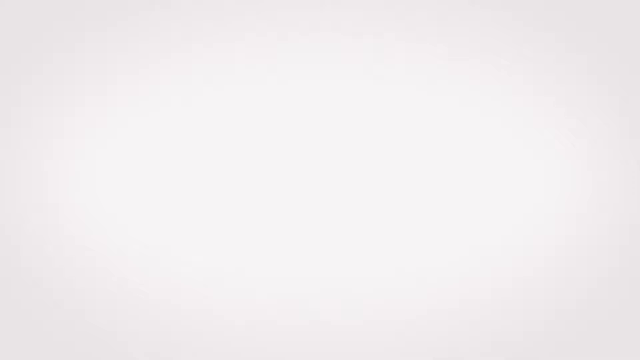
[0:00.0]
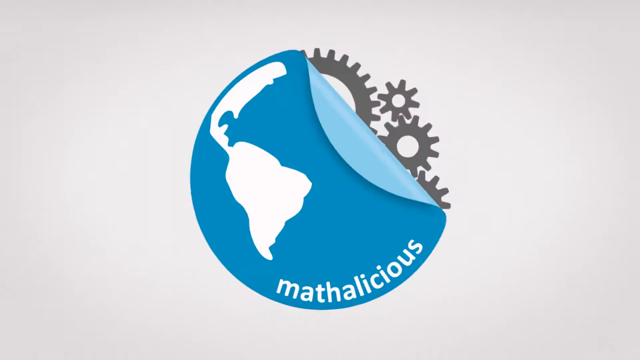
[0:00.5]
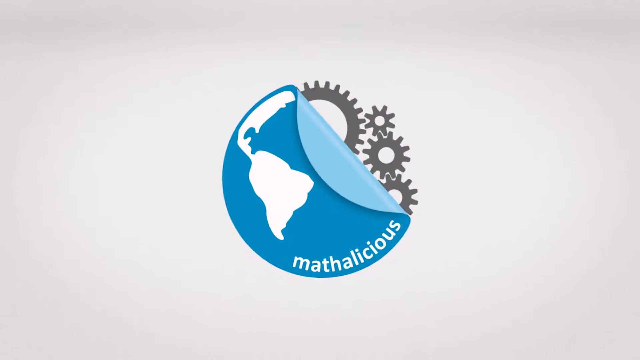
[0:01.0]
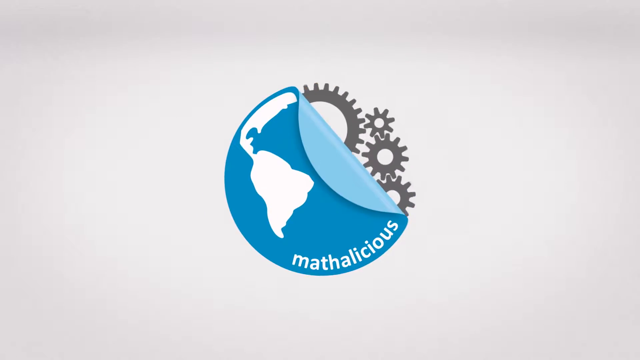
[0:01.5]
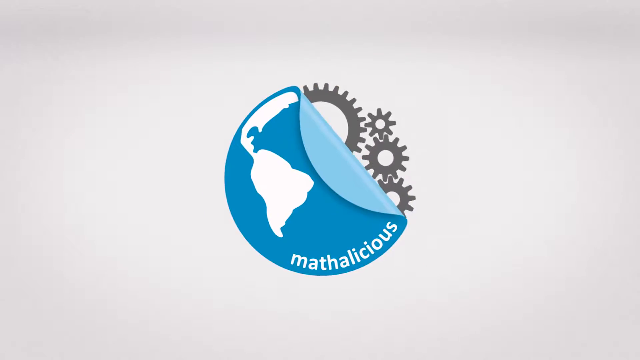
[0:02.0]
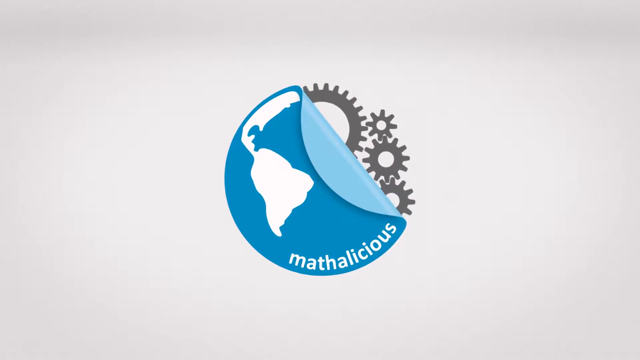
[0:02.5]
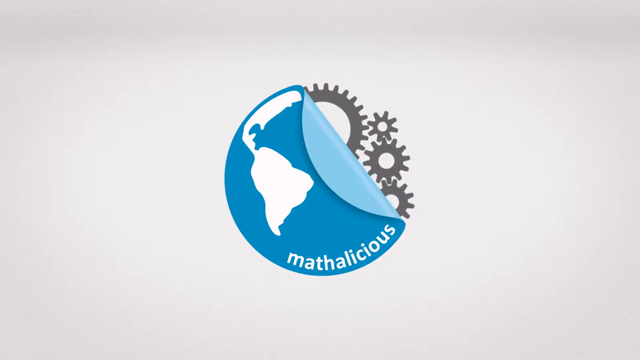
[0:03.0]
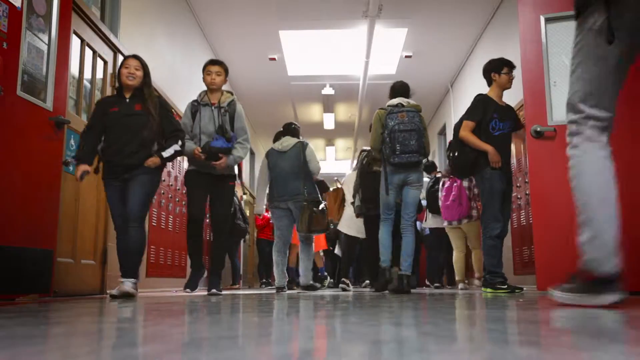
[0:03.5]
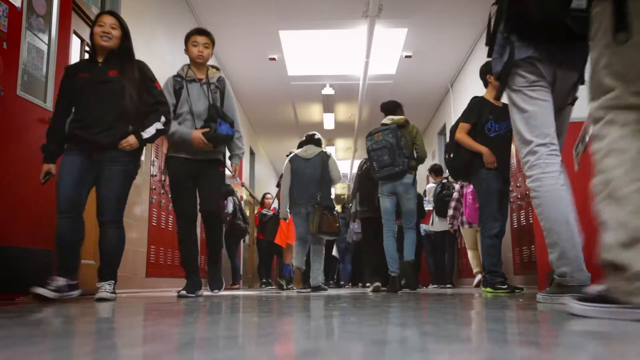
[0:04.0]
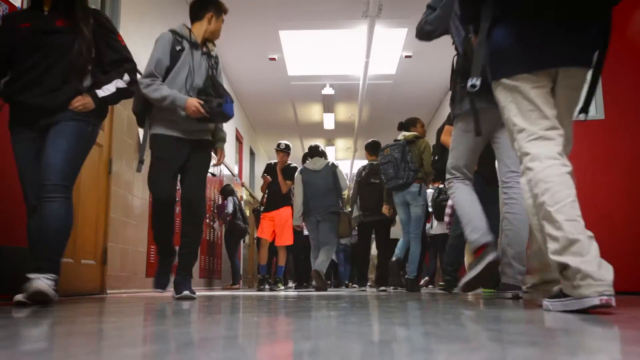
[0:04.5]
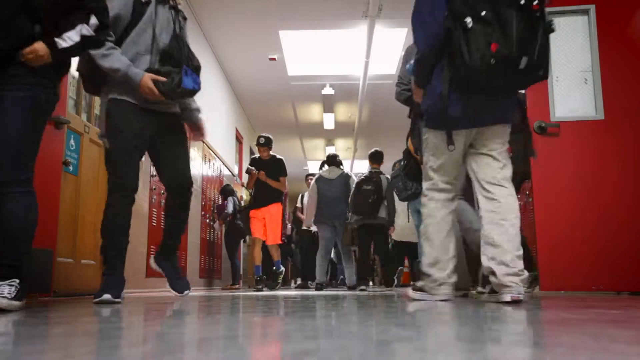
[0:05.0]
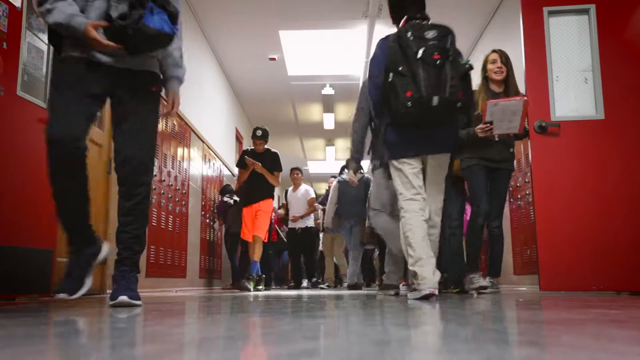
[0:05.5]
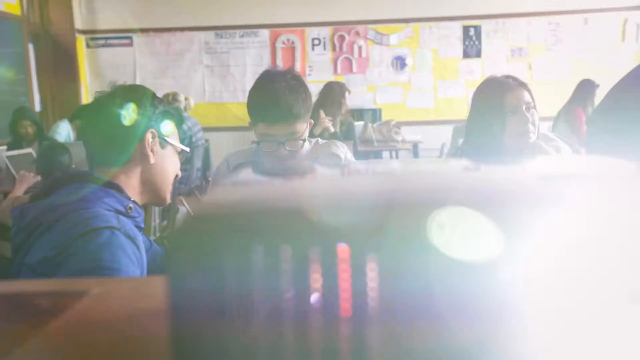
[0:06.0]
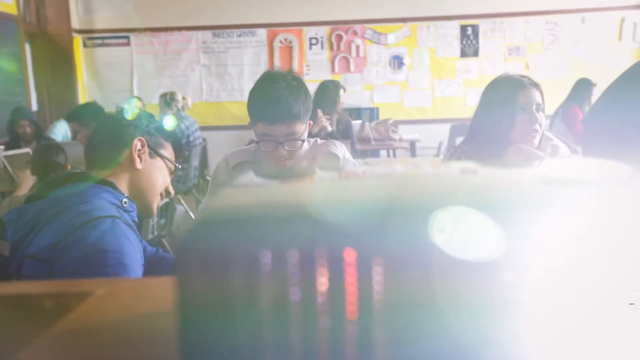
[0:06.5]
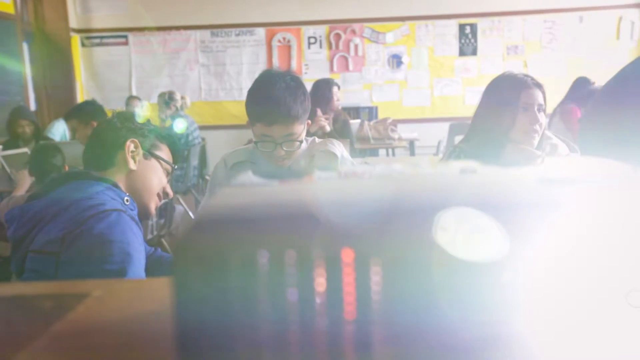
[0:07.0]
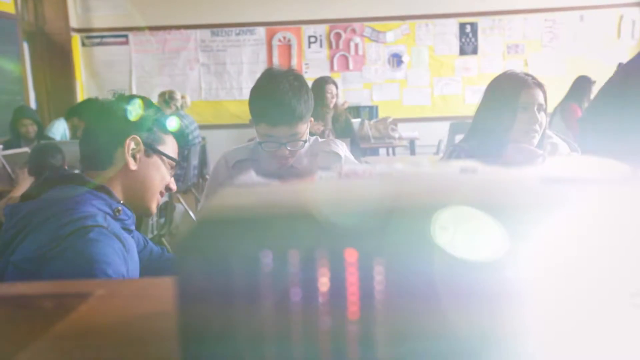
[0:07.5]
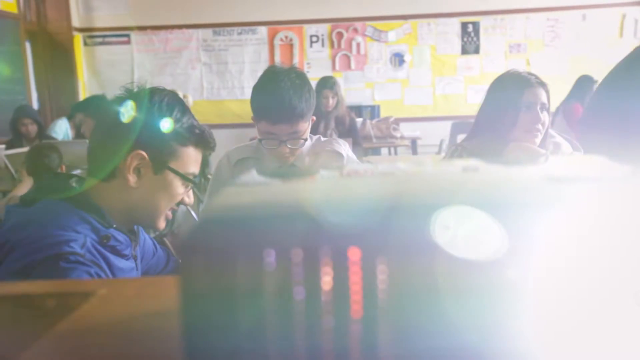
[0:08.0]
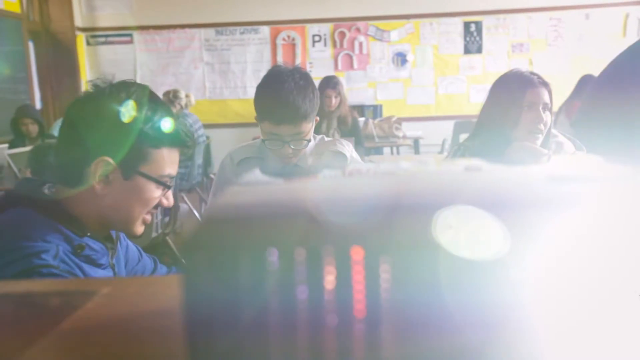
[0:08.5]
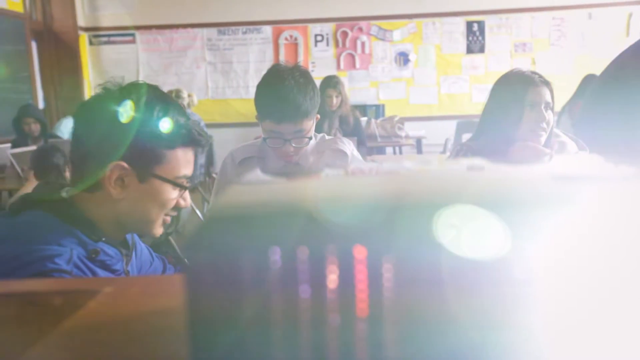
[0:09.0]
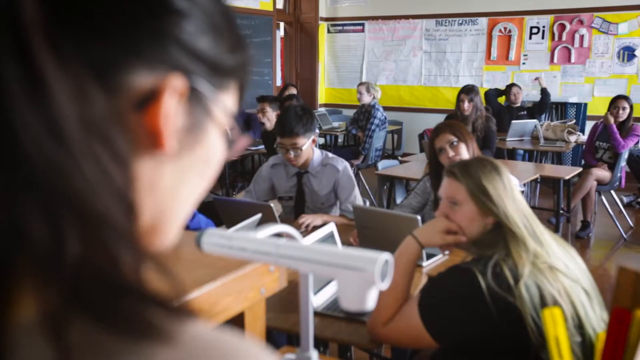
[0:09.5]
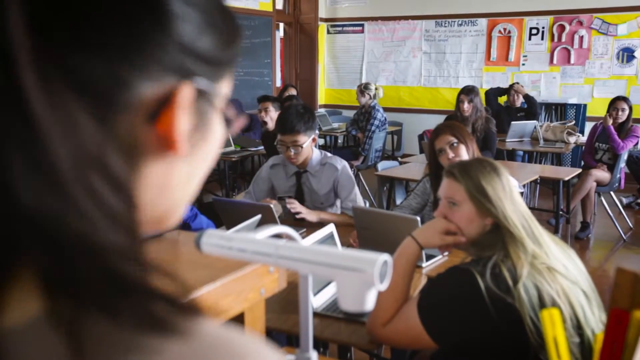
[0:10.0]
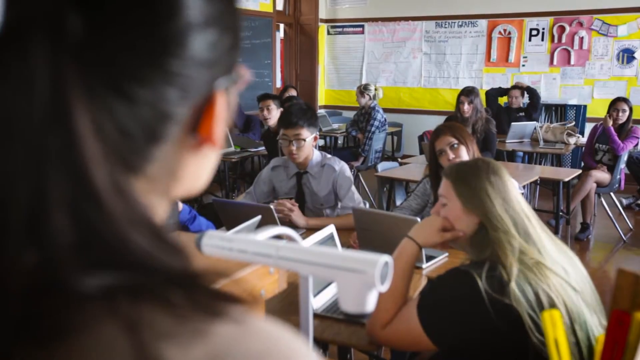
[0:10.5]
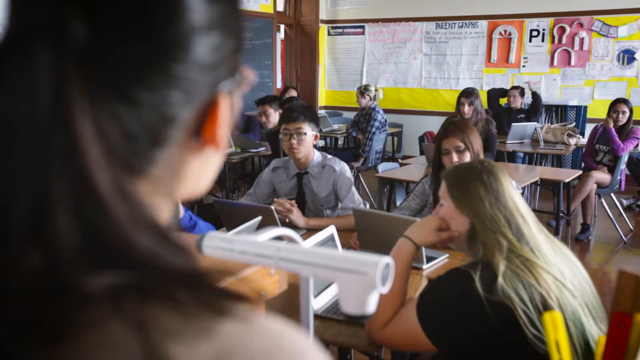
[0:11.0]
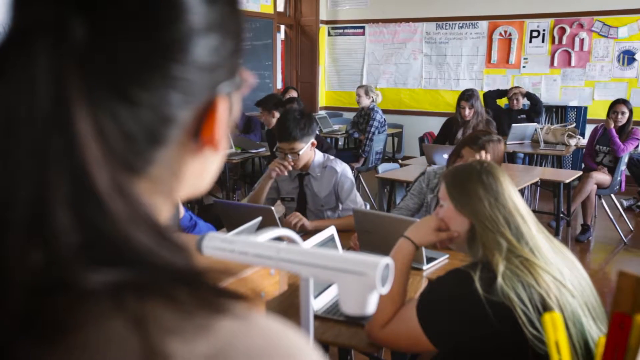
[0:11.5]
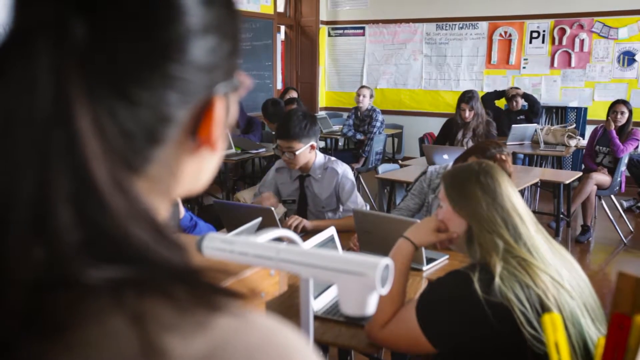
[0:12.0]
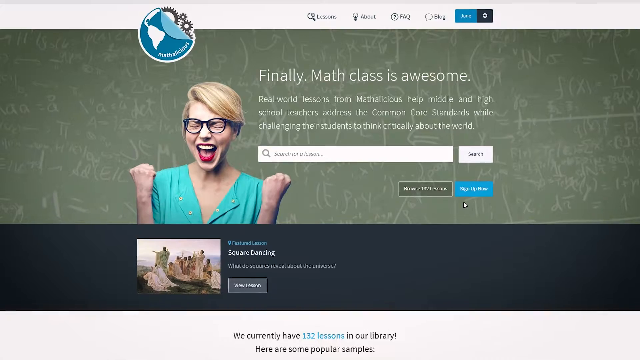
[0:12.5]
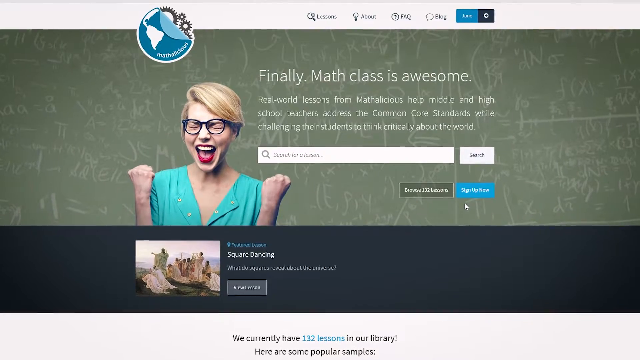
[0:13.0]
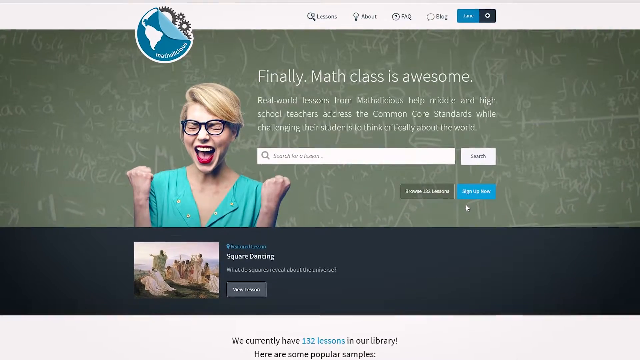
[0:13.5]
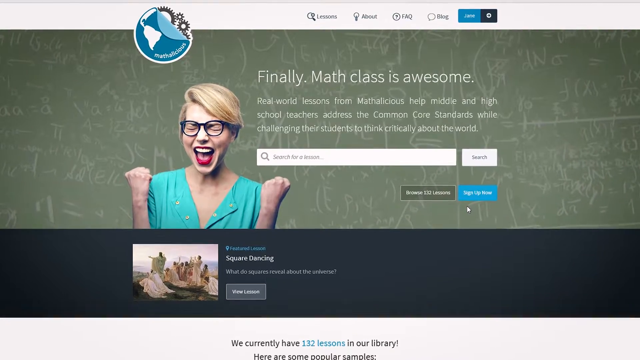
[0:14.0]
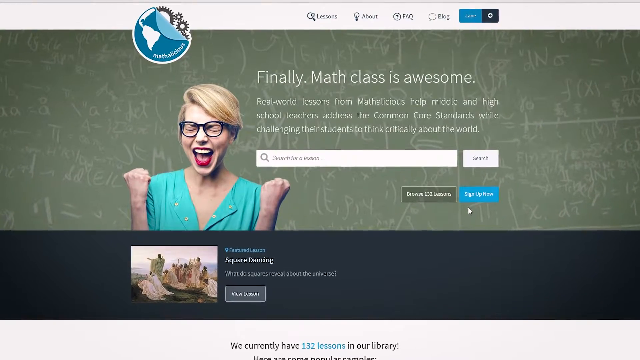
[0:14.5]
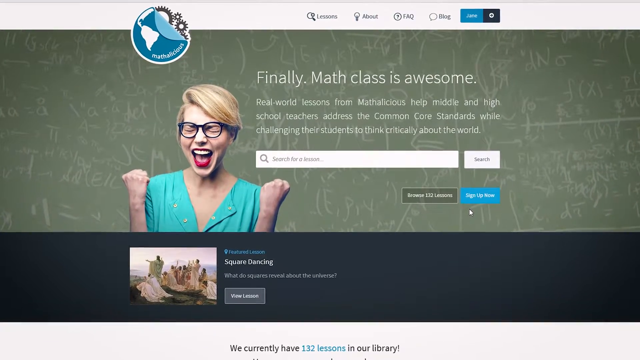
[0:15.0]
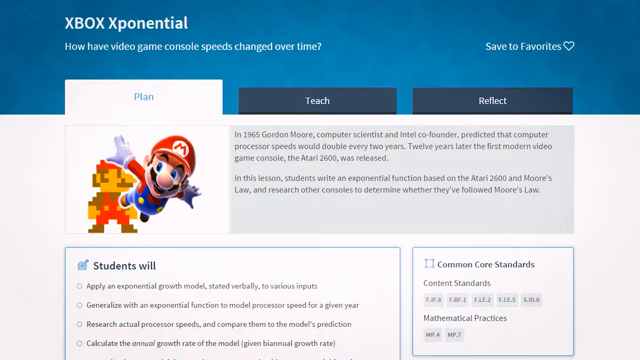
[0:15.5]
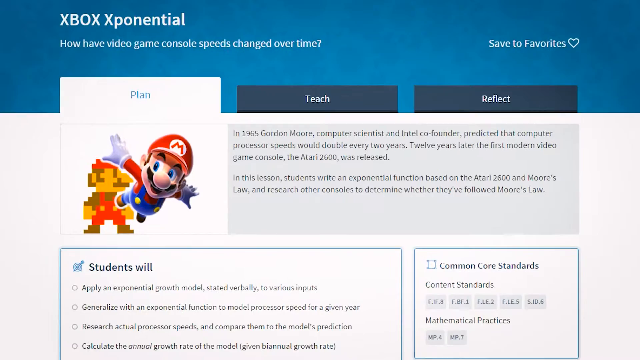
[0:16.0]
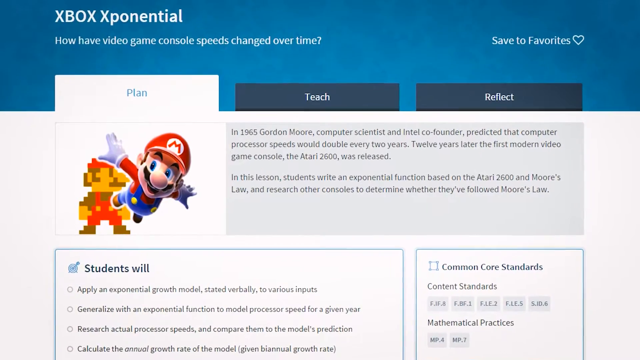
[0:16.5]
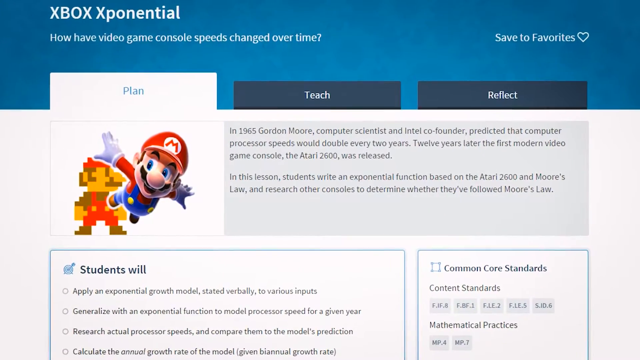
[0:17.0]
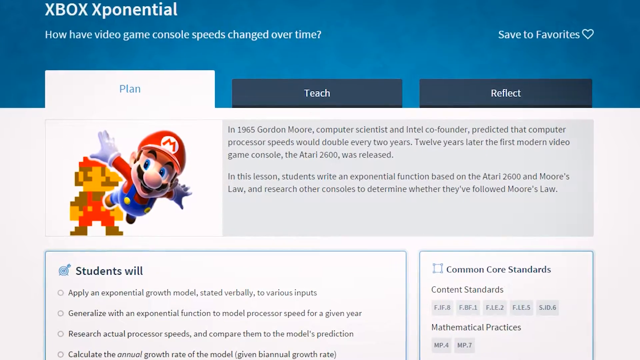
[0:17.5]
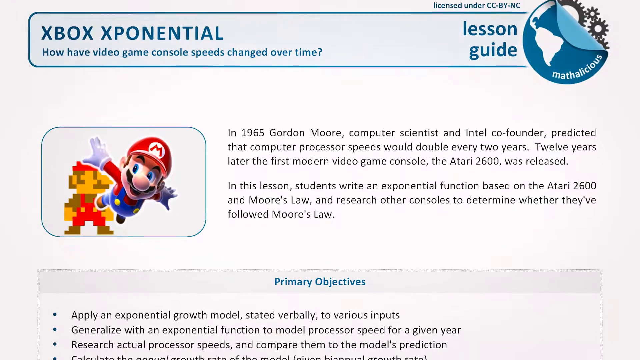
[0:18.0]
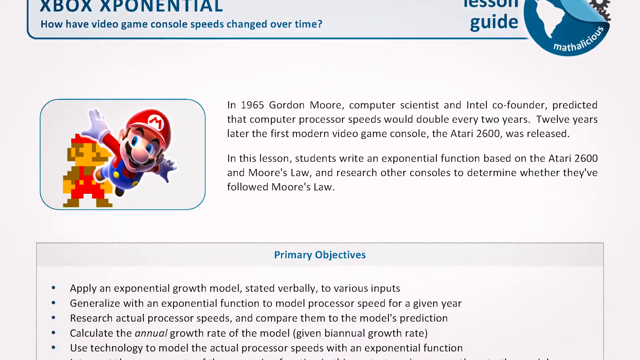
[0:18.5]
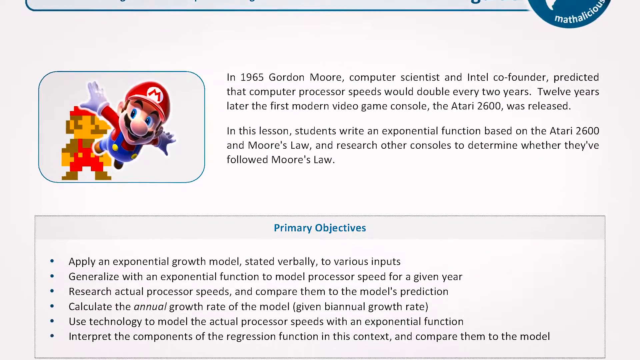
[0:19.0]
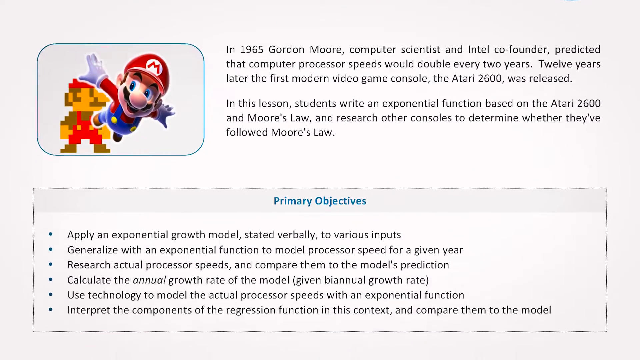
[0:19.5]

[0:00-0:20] The video opens on high school students walking in a hallway, then pans to a classroom where a projector is on. The kids seem to be around eighth grade. The teacher is shown talking to the students. The view then pans to a math website that describes some lessons and lists a set of goals that the students will be able to do by the end of the lesson; the text on the website is readable. The students seem to be mostly interacting with each other in the class, and a later shot shows them all listening to the teacher. The teacher seems to be in her thirties and wears glasses. Lots of class projects are on the board. Some students have laptops while others have nothing. Some students are visibly bored, and one student seems to be falling asleep.